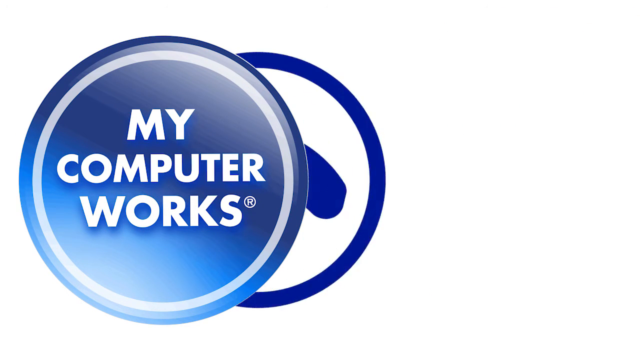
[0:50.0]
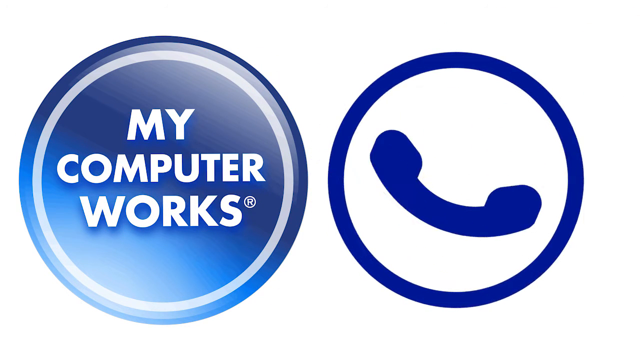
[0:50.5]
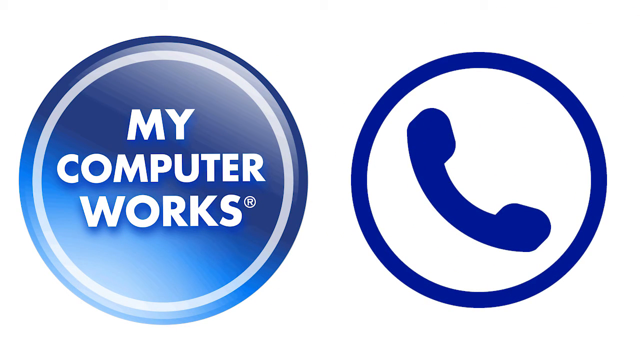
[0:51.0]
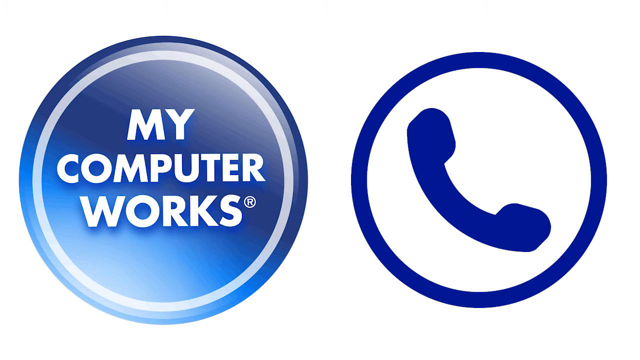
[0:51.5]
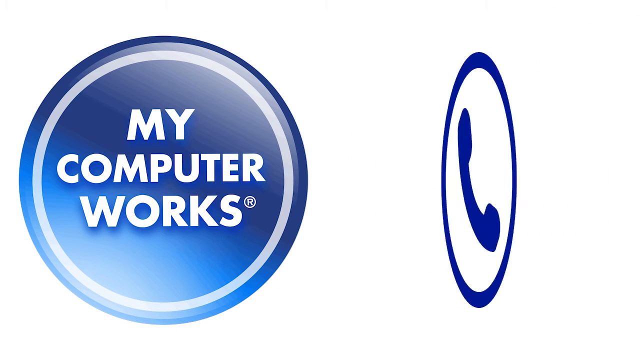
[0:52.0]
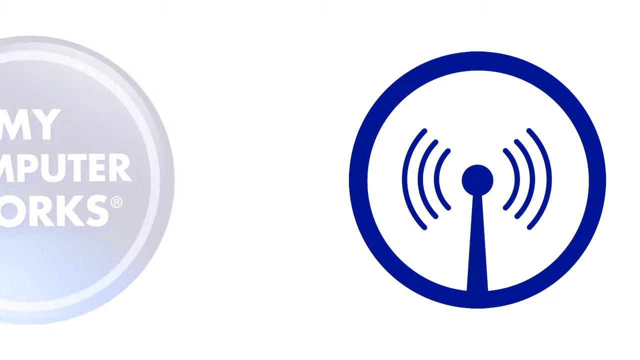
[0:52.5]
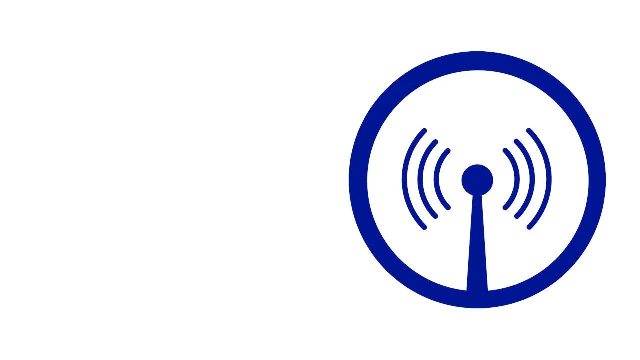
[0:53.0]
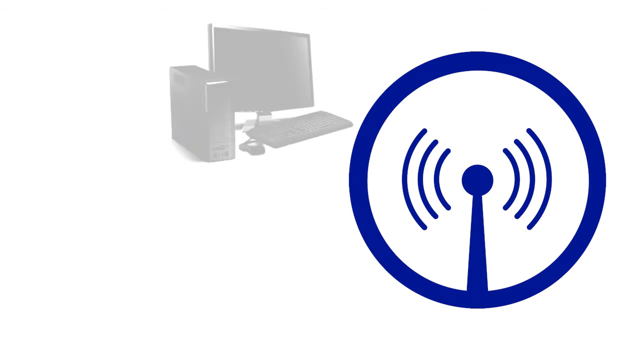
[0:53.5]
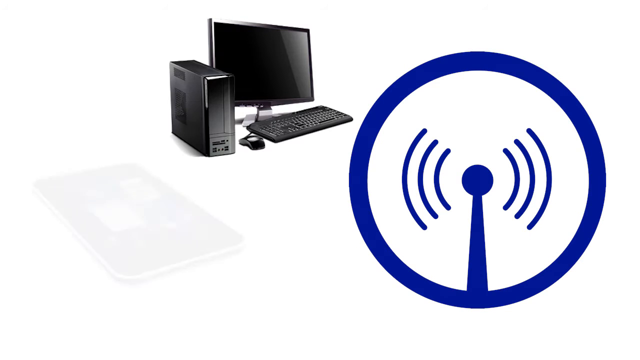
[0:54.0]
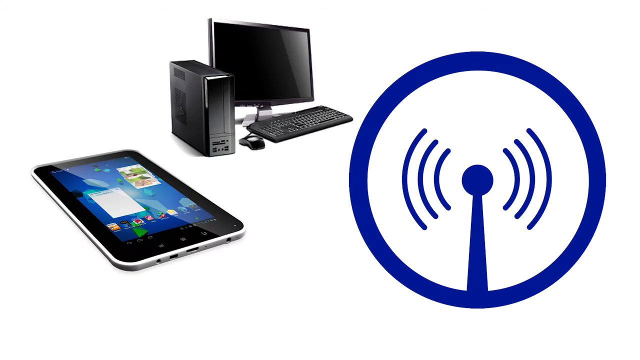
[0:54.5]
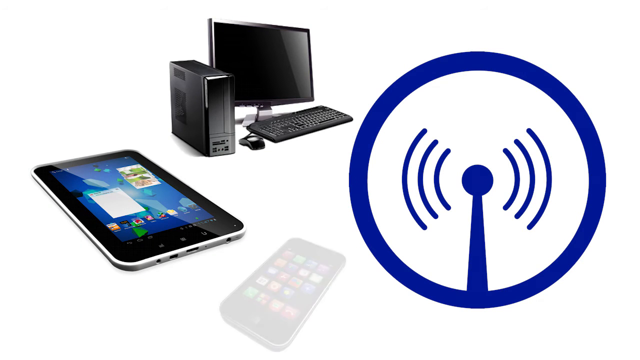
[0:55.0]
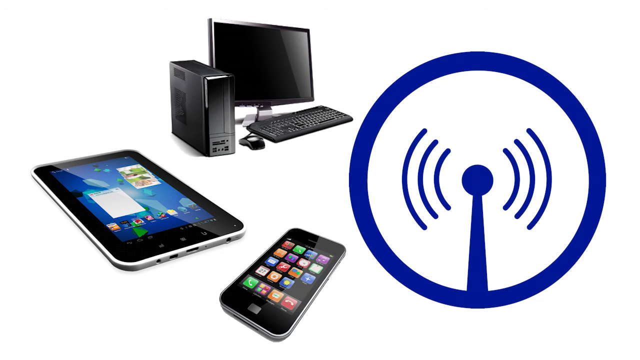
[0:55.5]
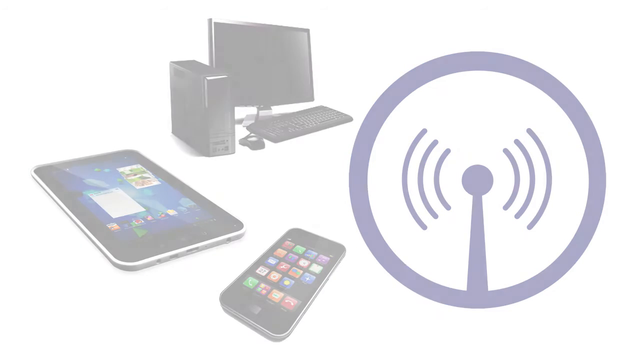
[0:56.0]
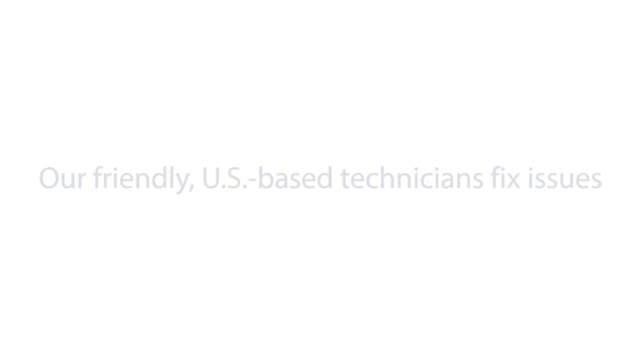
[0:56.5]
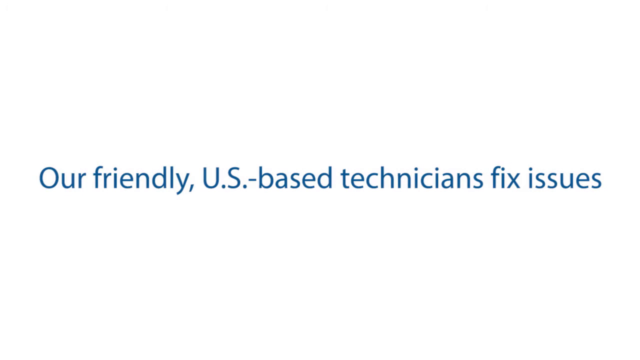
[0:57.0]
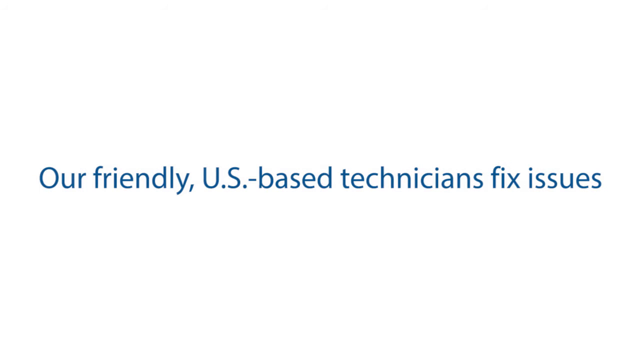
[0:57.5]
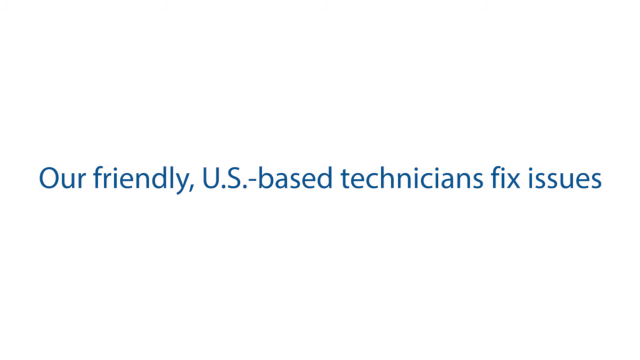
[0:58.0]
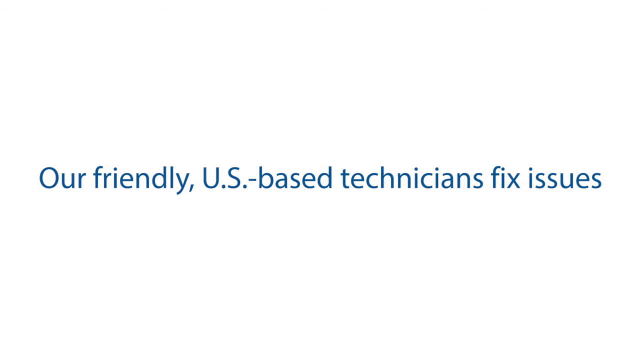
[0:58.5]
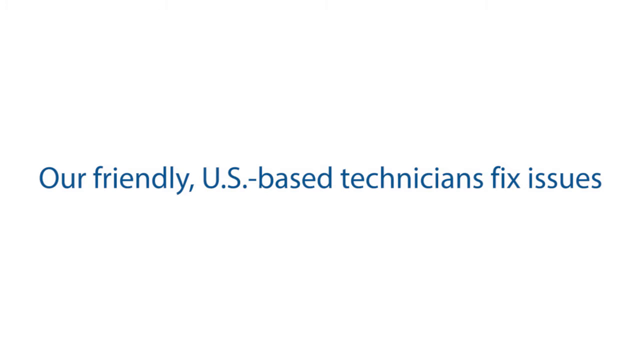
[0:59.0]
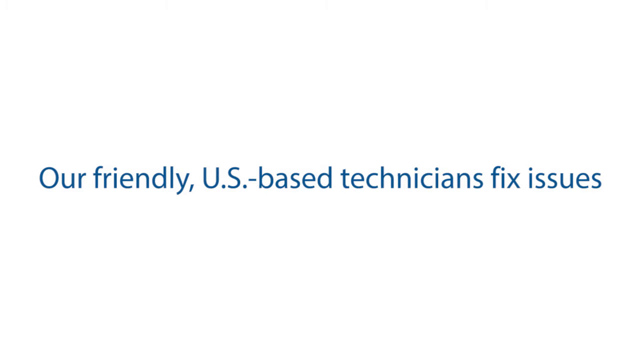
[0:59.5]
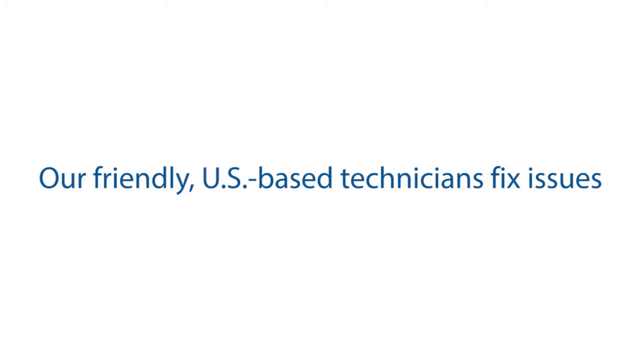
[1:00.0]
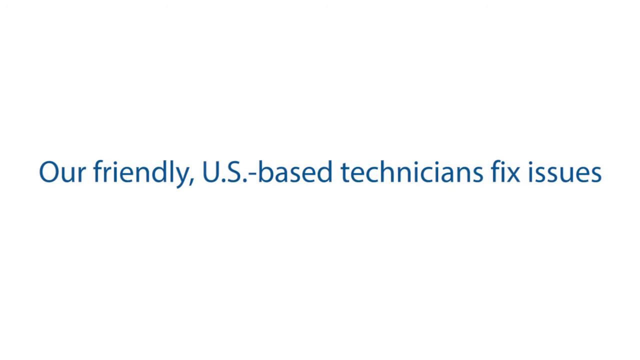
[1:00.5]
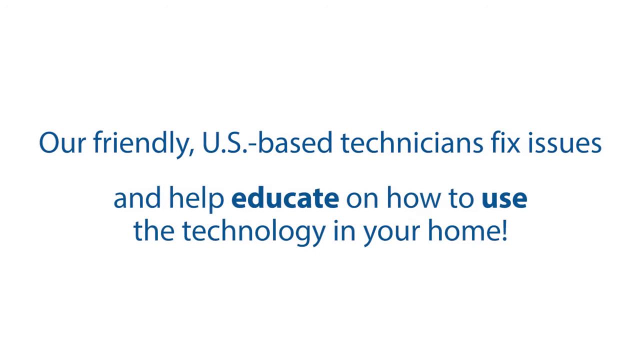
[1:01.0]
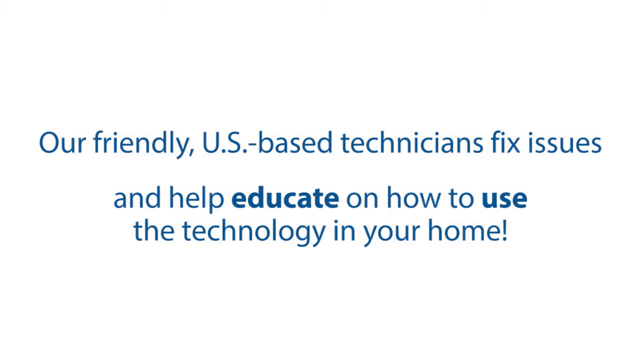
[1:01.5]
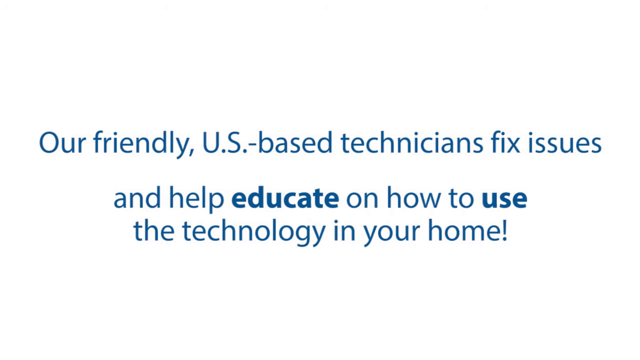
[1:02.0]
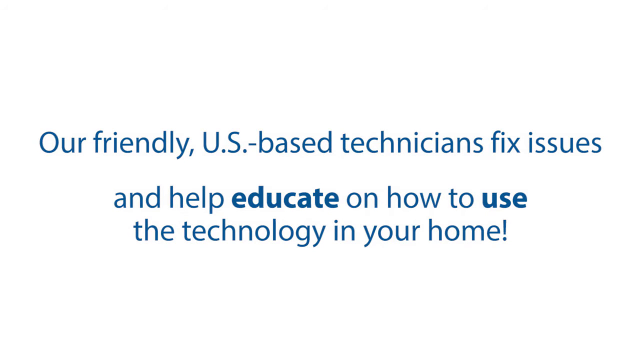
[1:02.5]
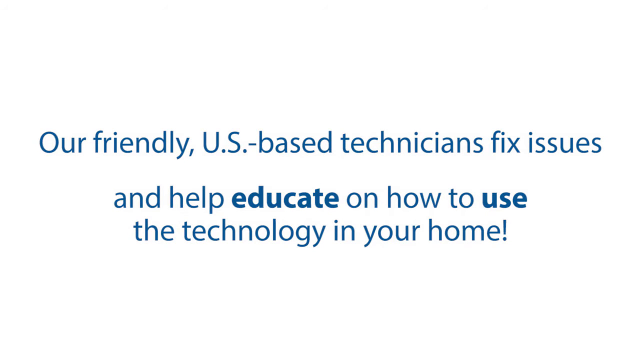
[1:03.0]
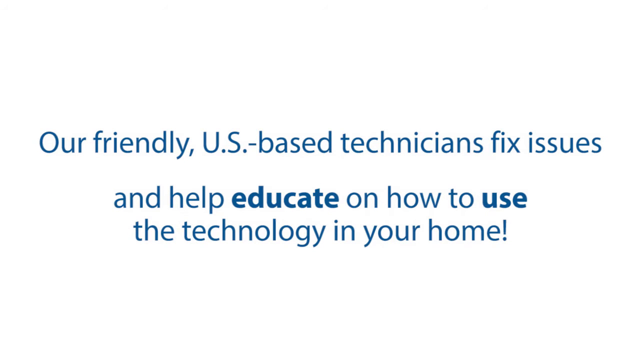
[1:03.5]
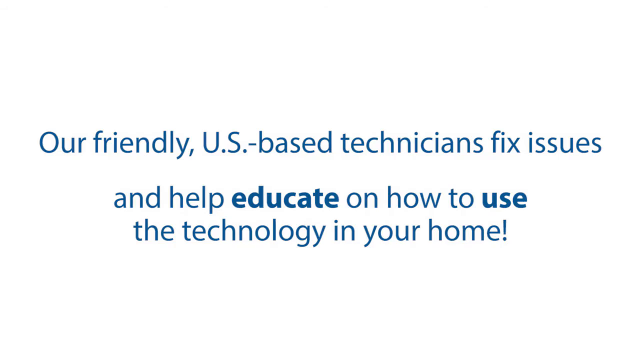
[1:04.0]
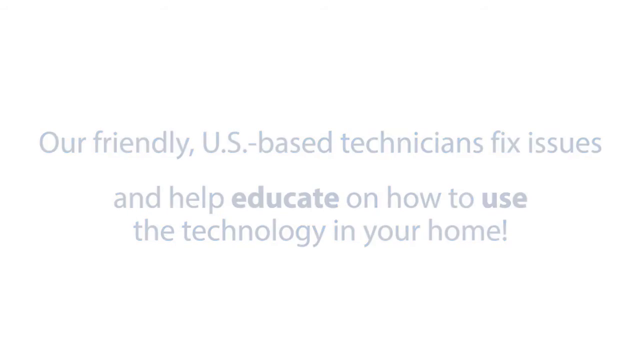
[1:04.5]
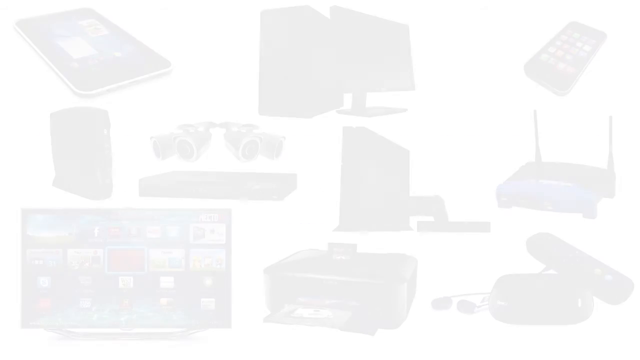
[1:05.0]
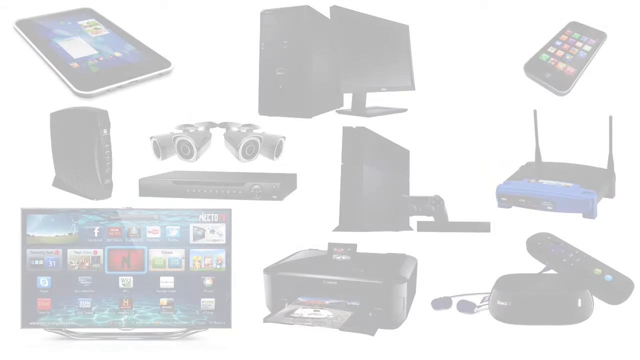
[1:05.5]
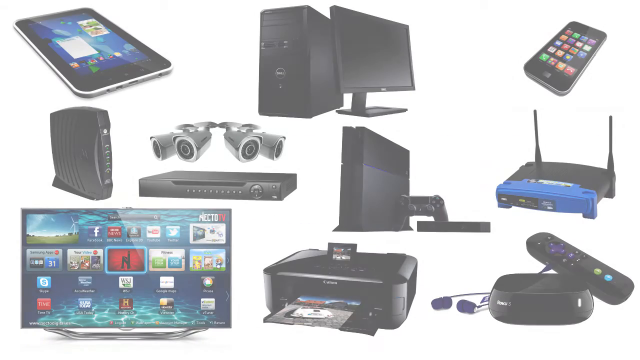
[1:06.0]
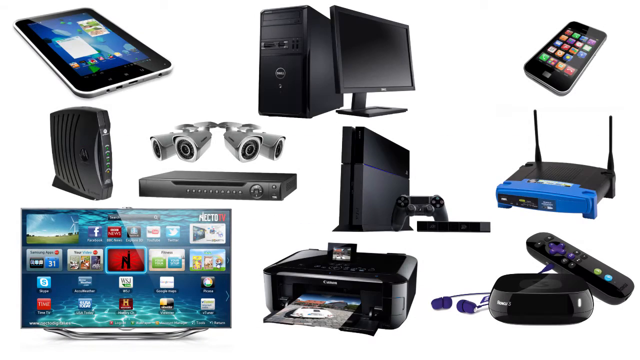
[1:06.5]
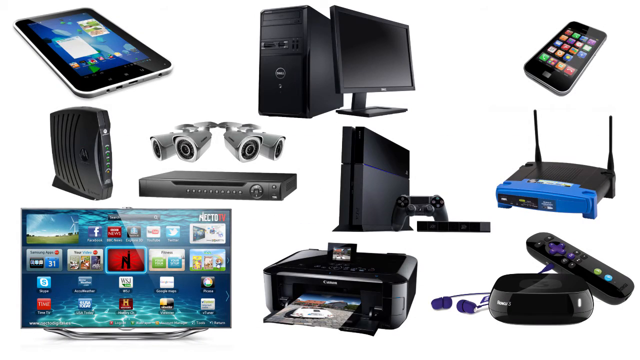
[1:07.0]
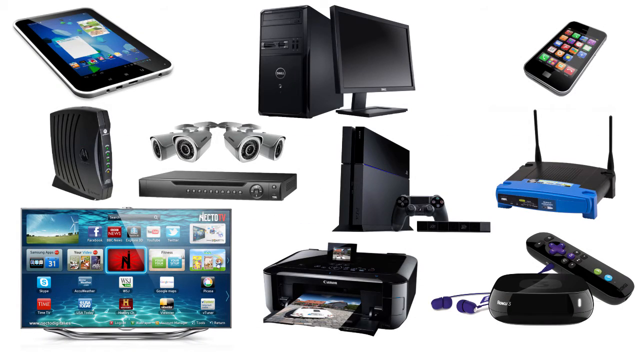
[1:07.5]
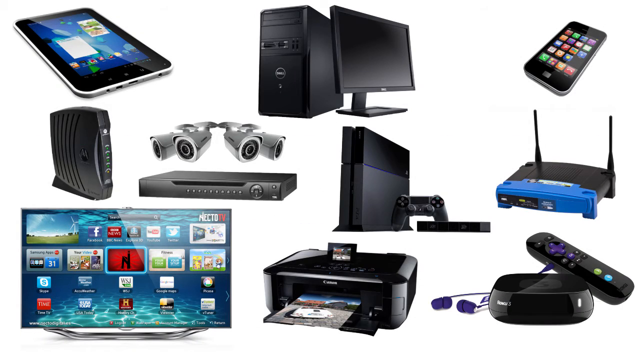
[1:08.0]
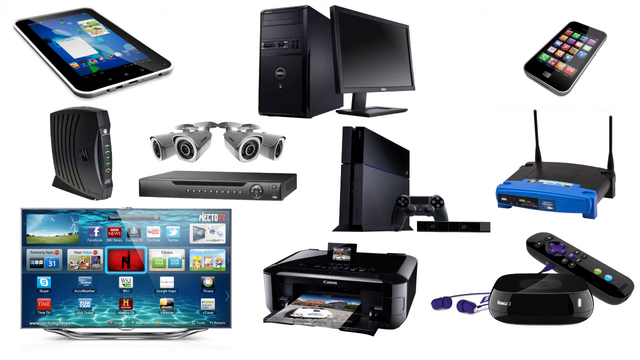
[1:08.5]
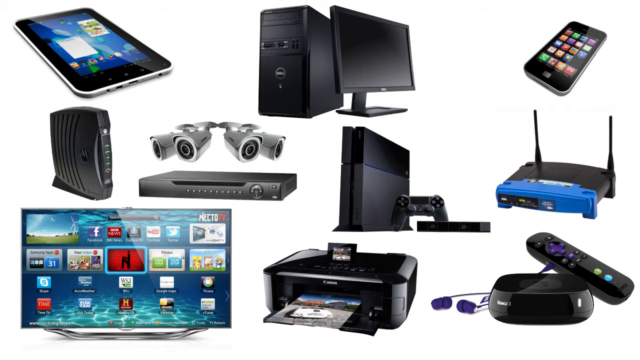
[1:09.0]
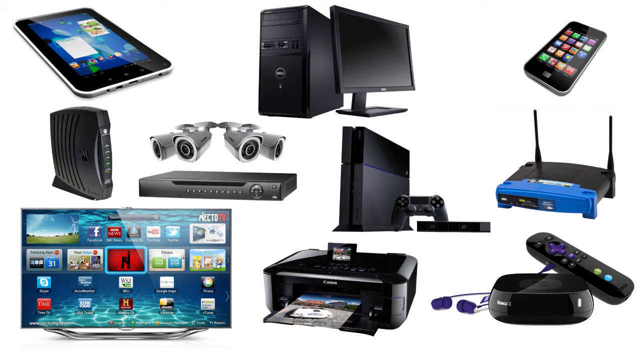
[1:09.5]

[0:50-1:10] The circle continues to roll out to the right from behind the circular My Computer Works logo. It is a dark blue circle with a white interior containing a blue graphic of a phone seen side on. The circle rotates to the right until it stops opposite the My Computer Works logo. The phone circle then flips around, as if to show its back, revealing an illustration of broadcast or radar: a dark blue circle in the middle on top of a blue pole, with three curved lines radiating out on either side. The My Computer Works logo fades out and disappears off the screen to the left. Objects then fade in and move up into position, in order: a computer display, keyboard and computer tower, a tablet, and a mobile phone. These three objects and the circular radar logo fade out, leaving a white screen, before blue writing quickly fades in across the middle saying "Our friendly US-based technicians fix issues". This text moves up slightly and stops, and in the space it vacated new text fades in saying "and help educate on how to use the technology in your home!" The text fades out, and the collection of items seen earlier fades back in against a white background.